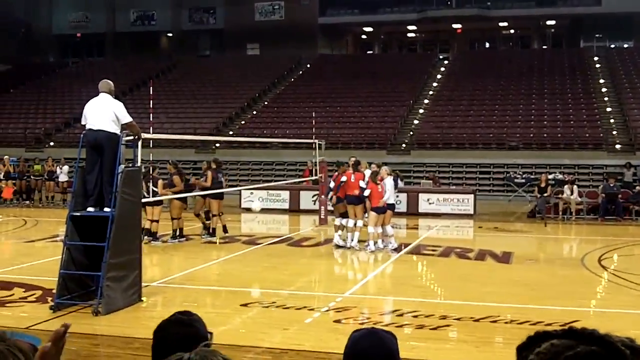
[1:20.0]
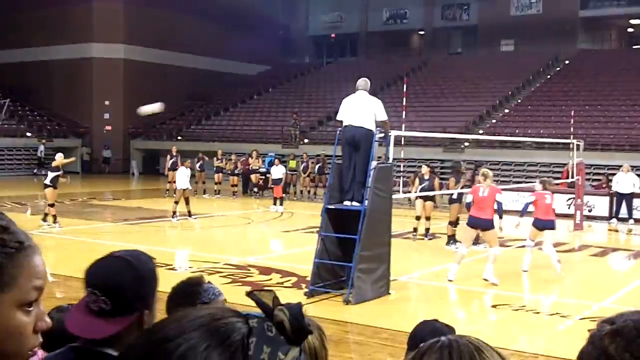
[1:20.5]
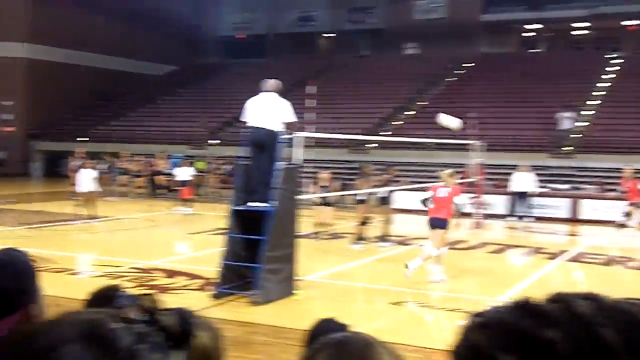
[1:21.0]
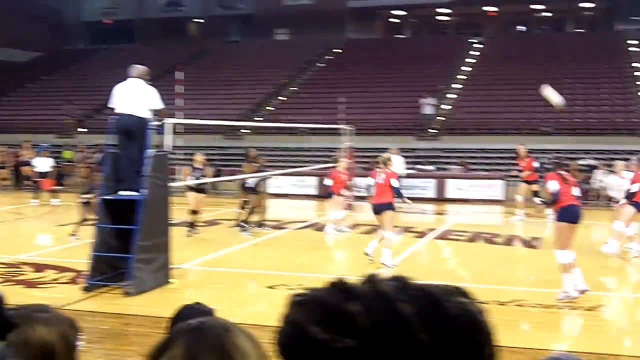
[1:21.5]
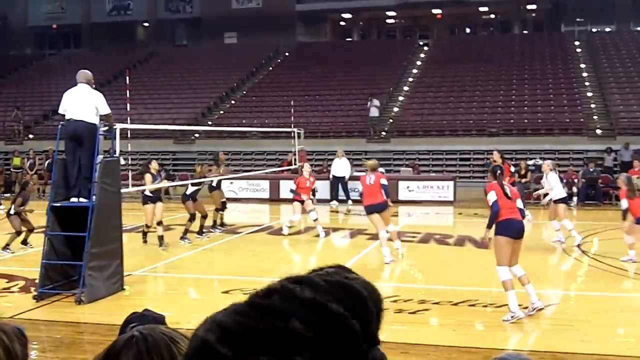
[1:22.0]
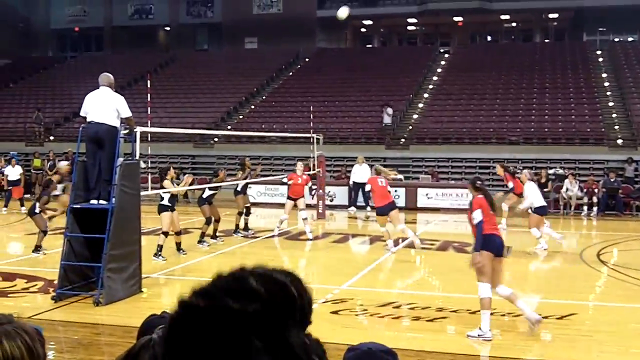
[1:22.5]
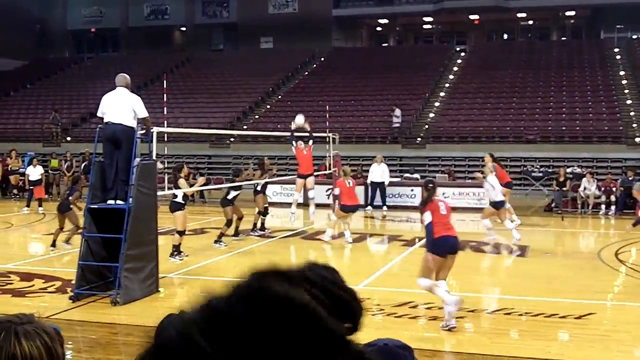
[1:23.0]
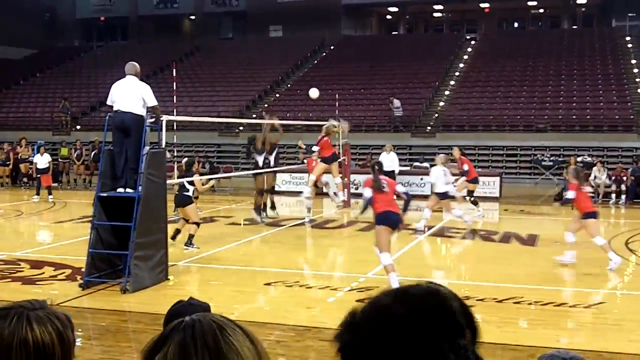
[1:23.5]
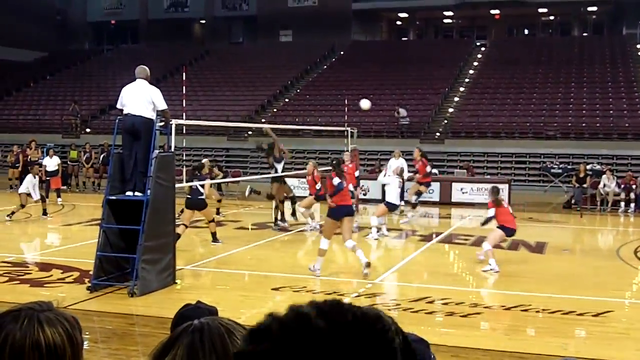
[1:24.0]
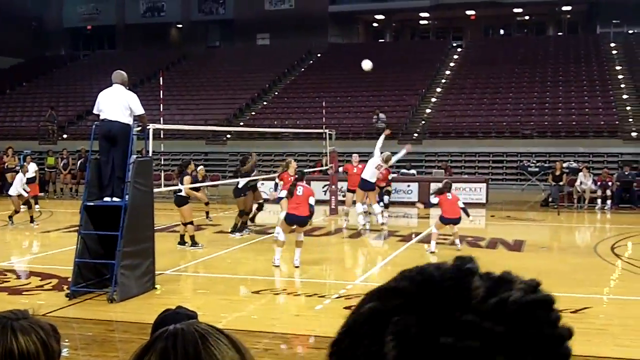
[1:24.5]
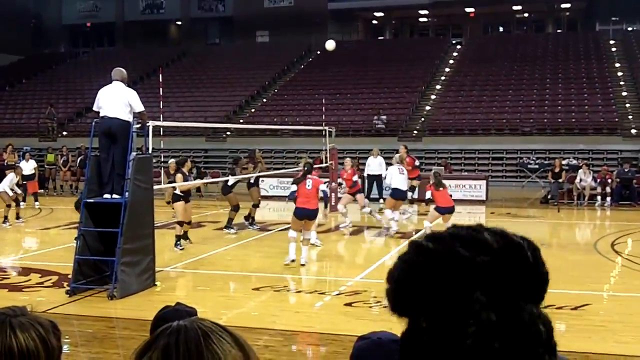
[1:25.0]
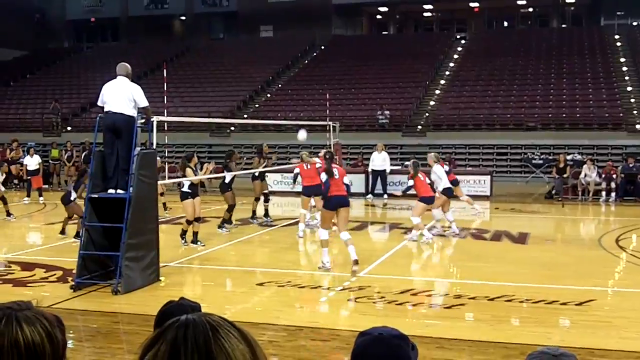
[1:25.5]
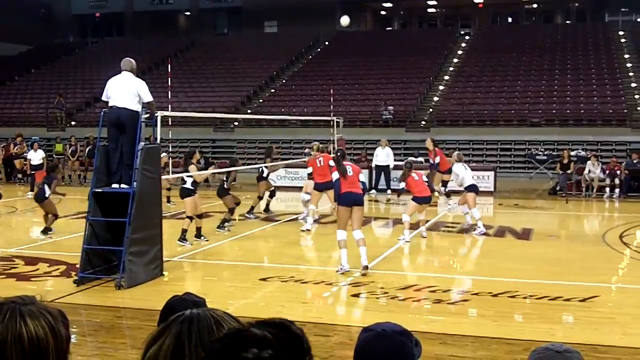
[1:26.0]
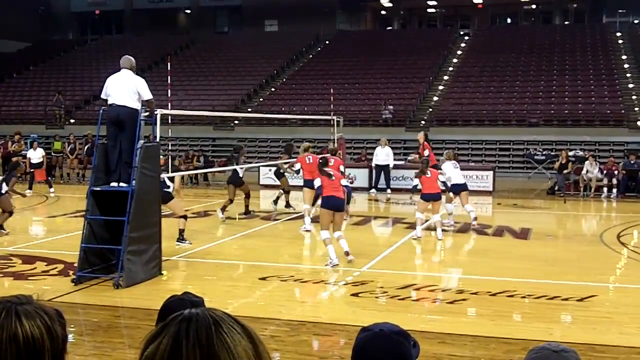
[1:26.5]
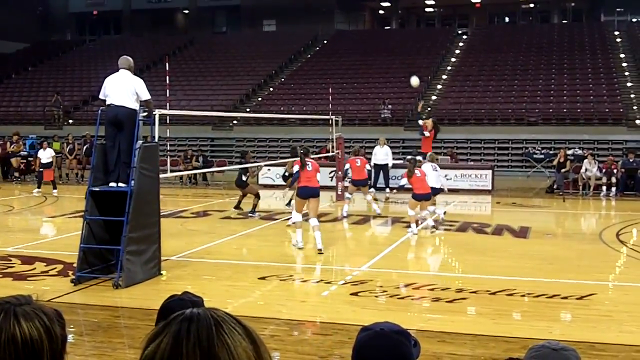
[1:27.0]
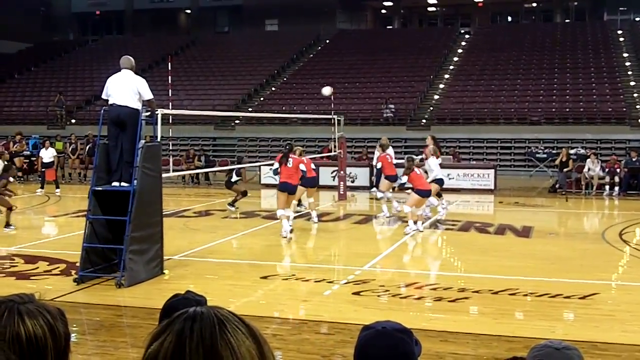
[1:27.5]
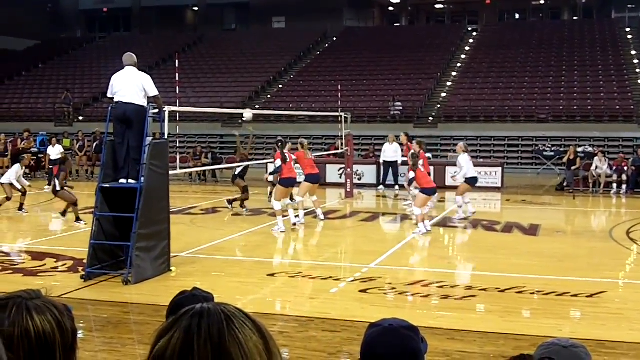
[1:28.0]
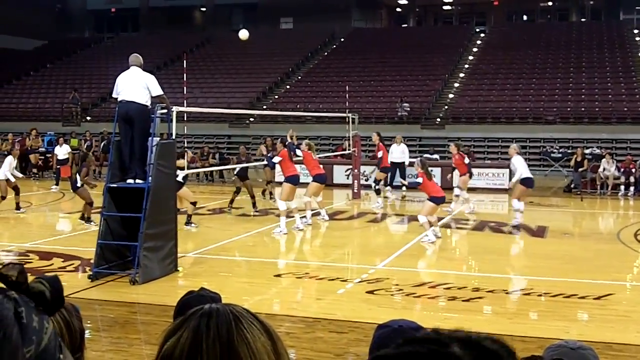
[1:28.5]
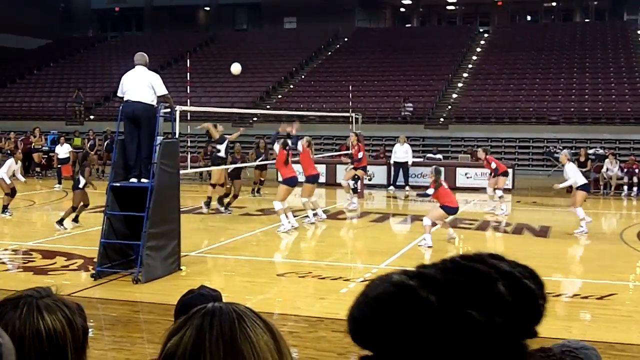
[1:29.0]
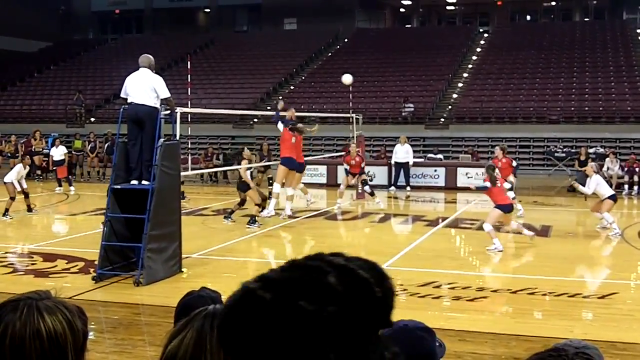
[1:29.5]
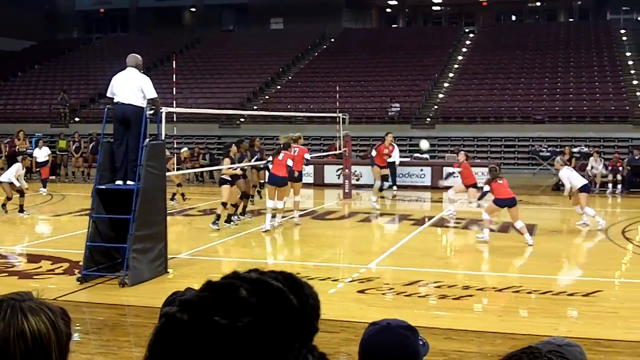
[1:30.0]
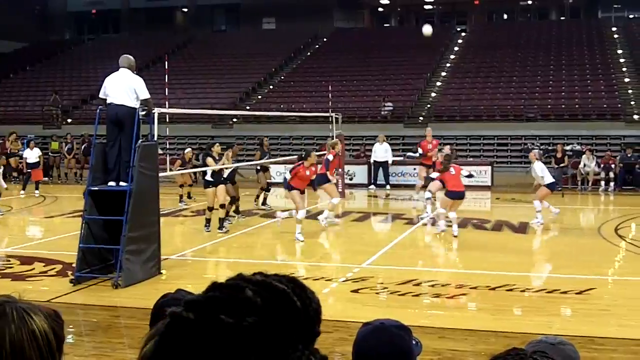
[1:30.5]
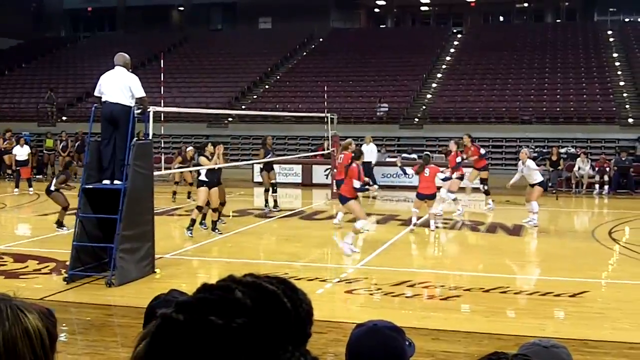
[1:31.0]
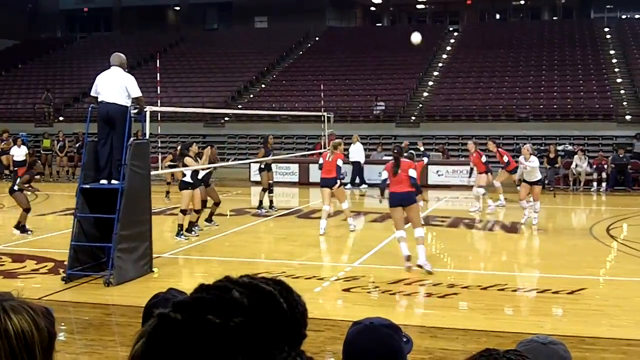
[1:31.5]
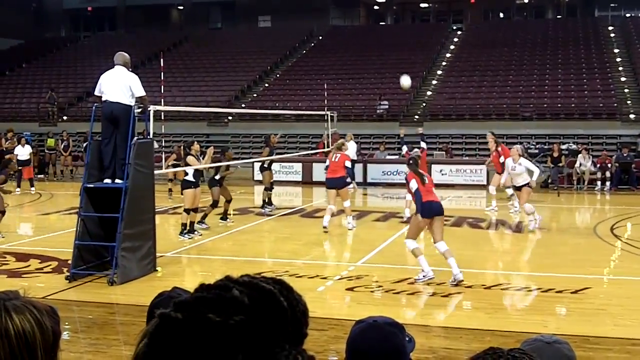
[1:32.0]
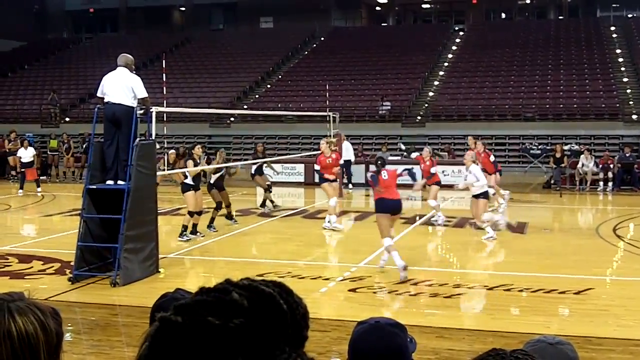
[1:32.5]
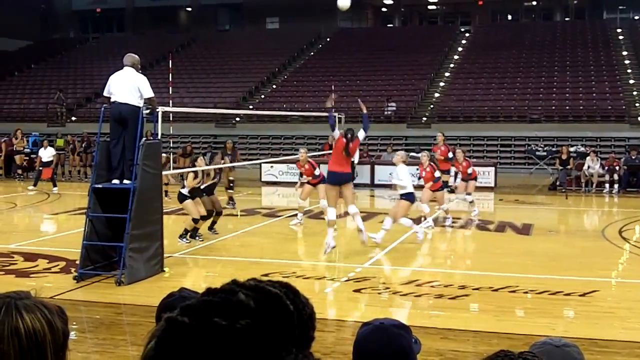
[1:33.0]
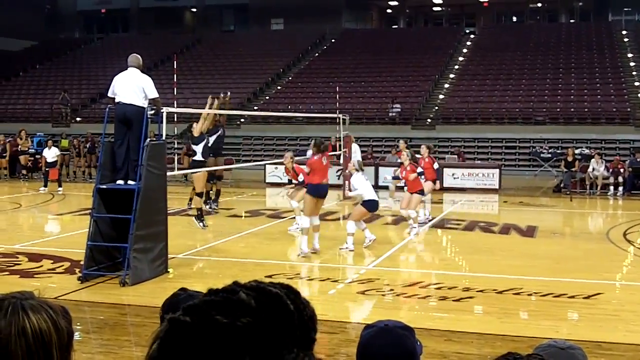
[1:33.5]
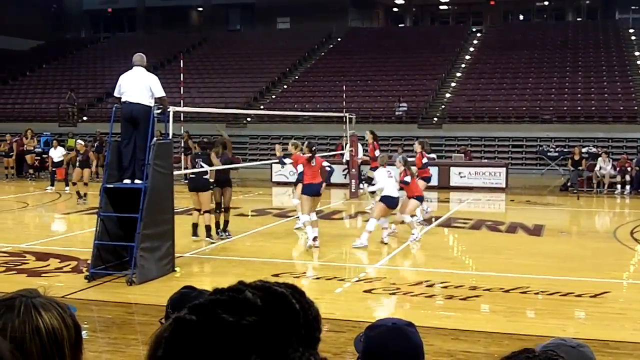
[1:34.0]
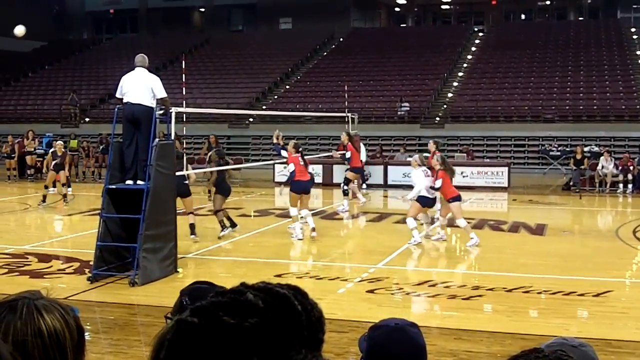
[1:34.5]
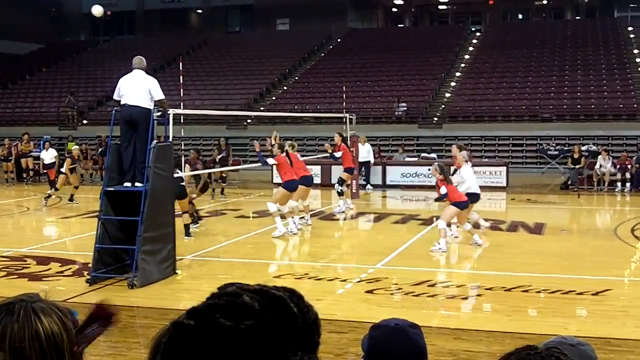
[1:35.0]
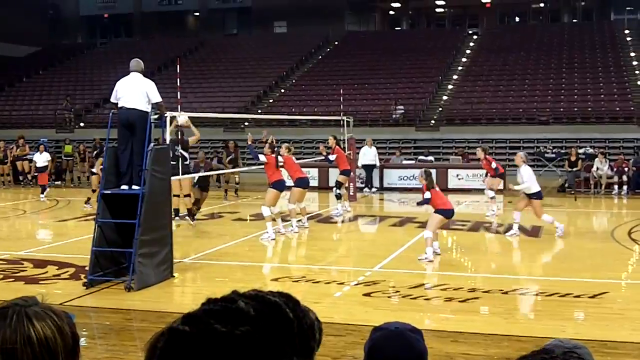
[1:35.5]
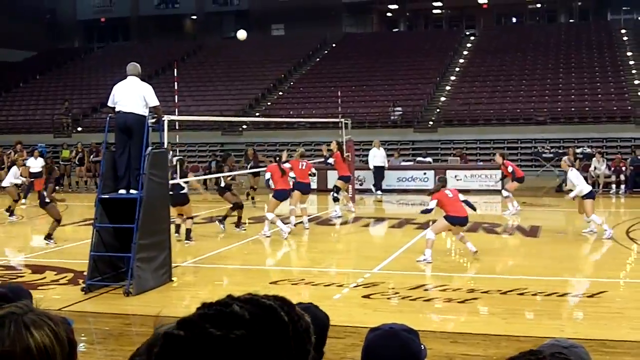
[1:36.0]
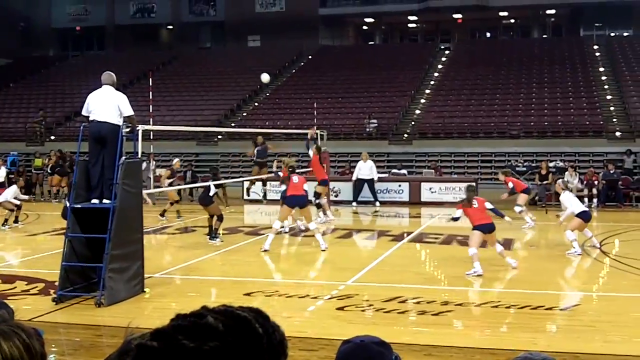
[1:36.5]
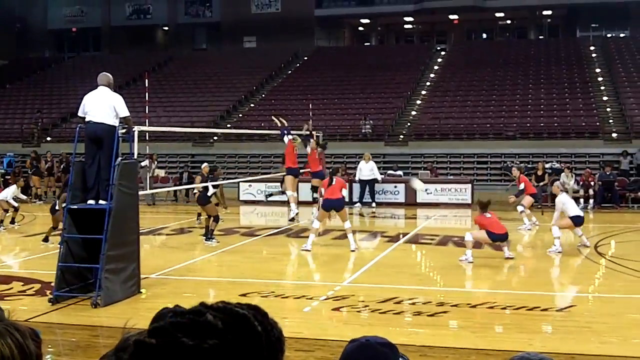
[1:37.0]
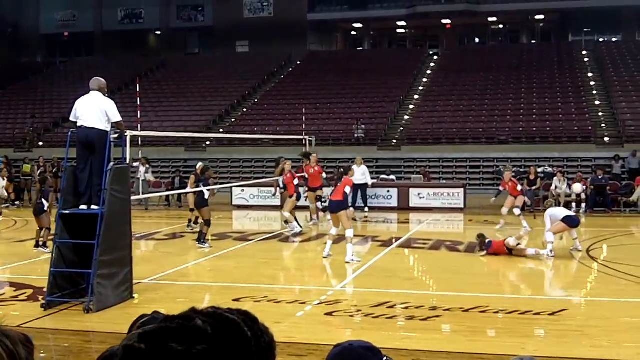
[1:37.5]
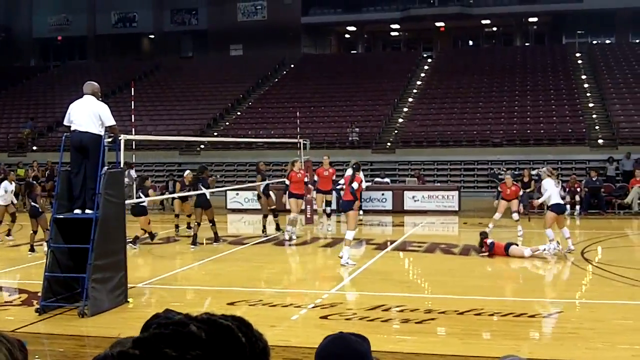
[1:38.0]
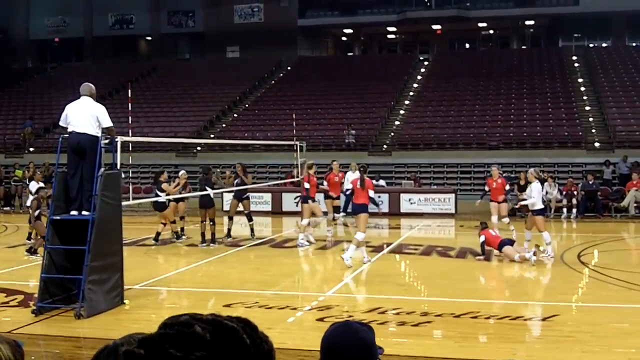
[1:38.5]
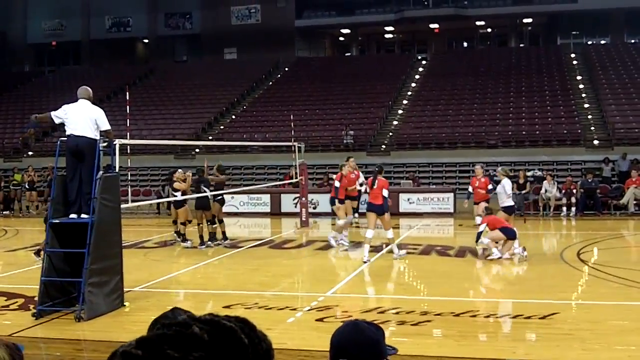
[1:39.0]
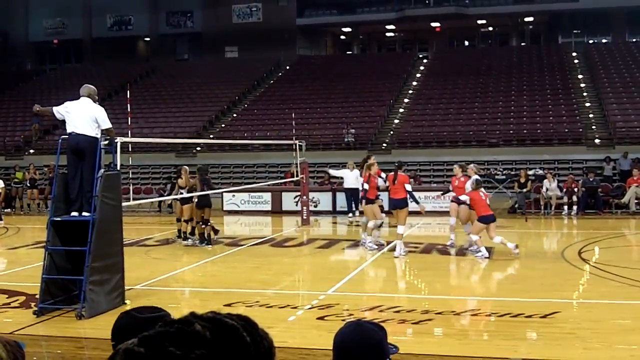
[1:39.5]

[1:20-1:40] A red team and a black team volley the ball back and forth. The black team seems to have been dominating, and scores again with a very hard serve over the net that lands on the ground between players of the opposing team. A referee stands on a little platform with some steps leading up to it, holding on to a railing; he wears black pants and a white shirt, watches every move, and calls the plays. When the black team does well, some audience members stand up, cheer, and go a little onto the court, but mostly the backs of their heads are visible. Across the way, the stadium seats are completely empty. Players sit on the bench, and one of the coaches, in white, is walking rather than sitting; she may also be a judge on the other side, which is hard to tell. Adults sit on the other side, and one of them may be a coach sitting at the end of the bench.